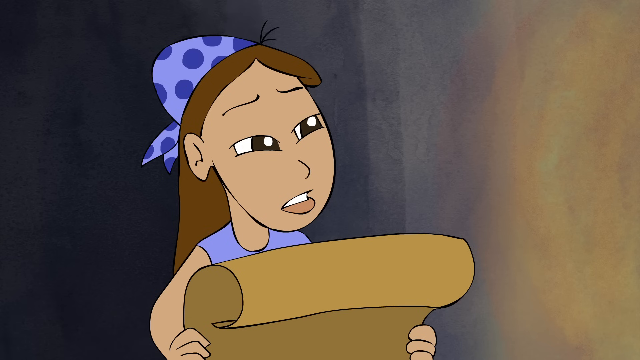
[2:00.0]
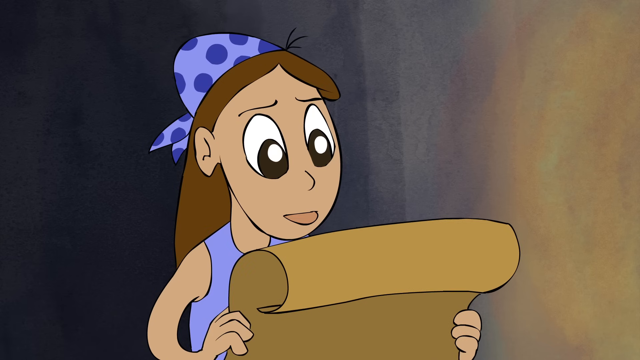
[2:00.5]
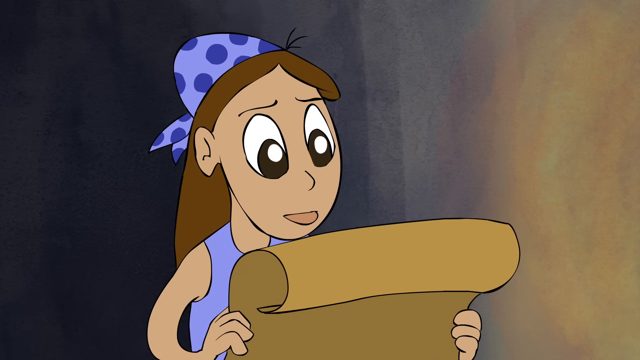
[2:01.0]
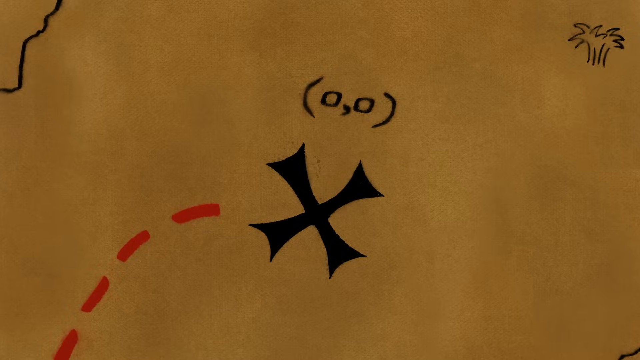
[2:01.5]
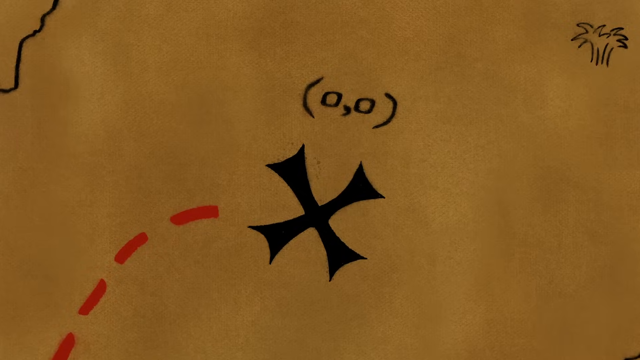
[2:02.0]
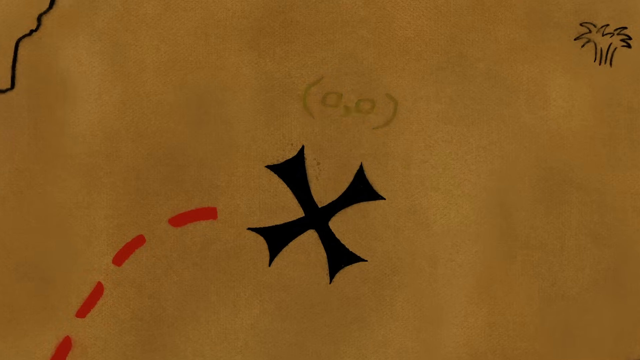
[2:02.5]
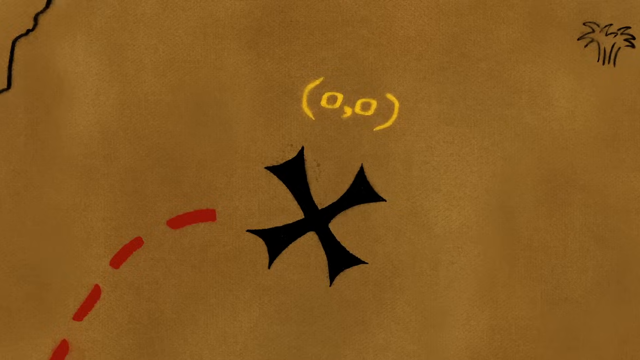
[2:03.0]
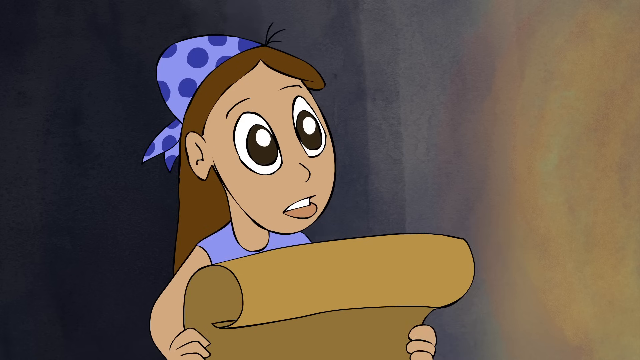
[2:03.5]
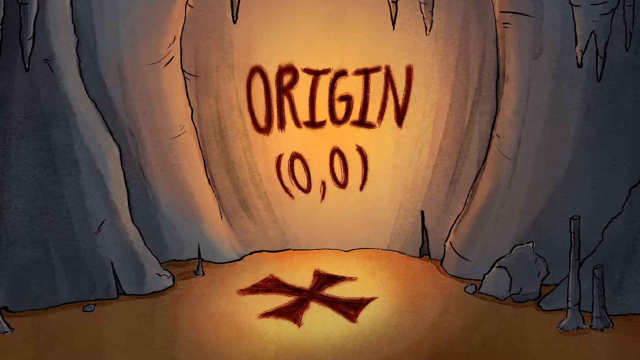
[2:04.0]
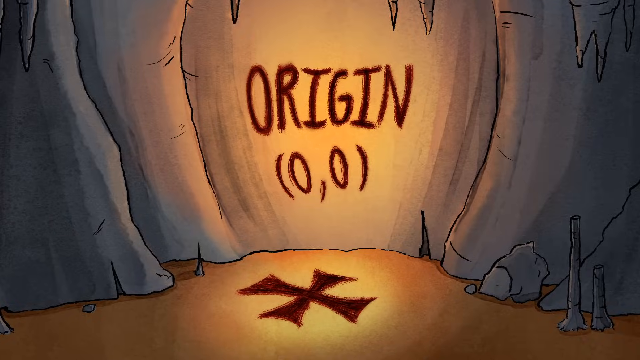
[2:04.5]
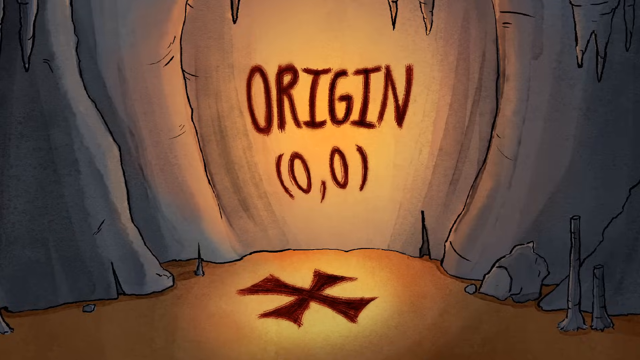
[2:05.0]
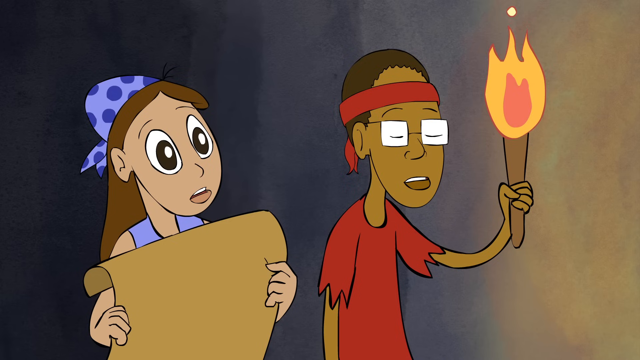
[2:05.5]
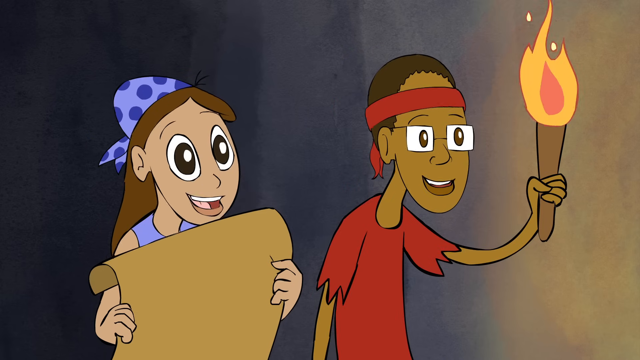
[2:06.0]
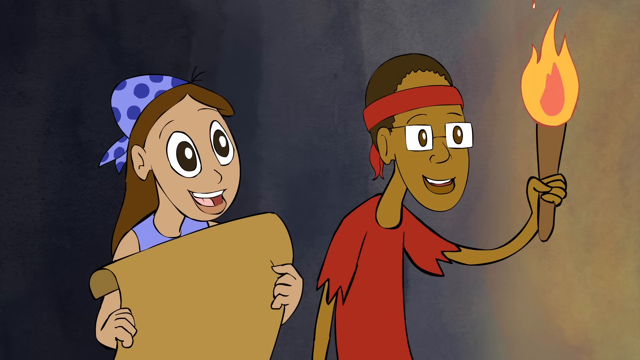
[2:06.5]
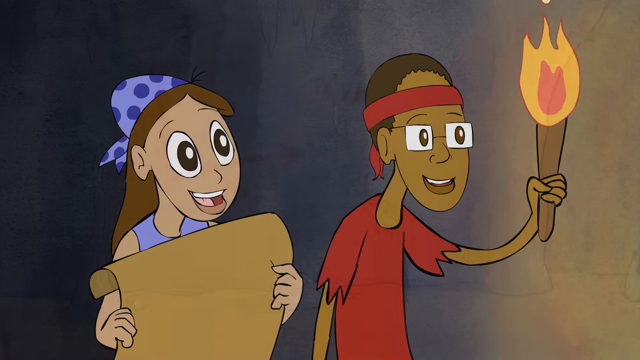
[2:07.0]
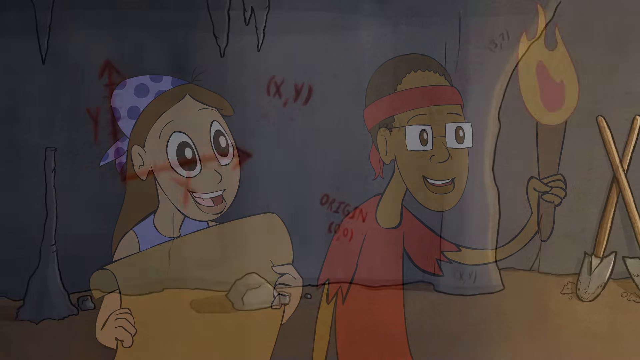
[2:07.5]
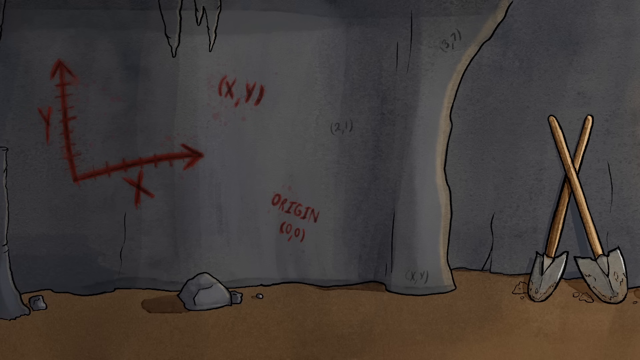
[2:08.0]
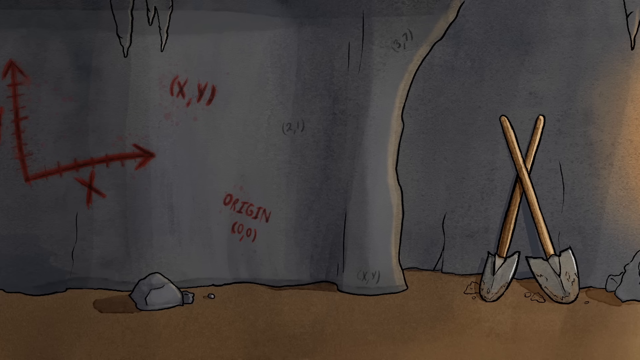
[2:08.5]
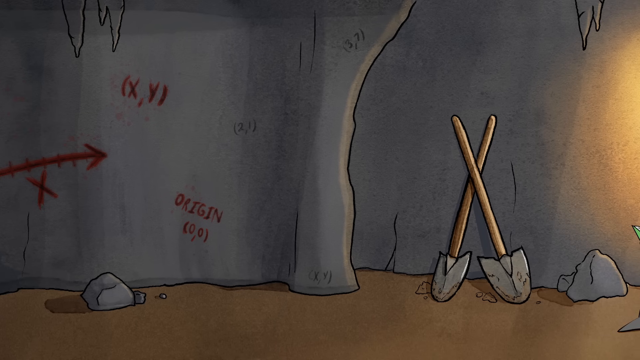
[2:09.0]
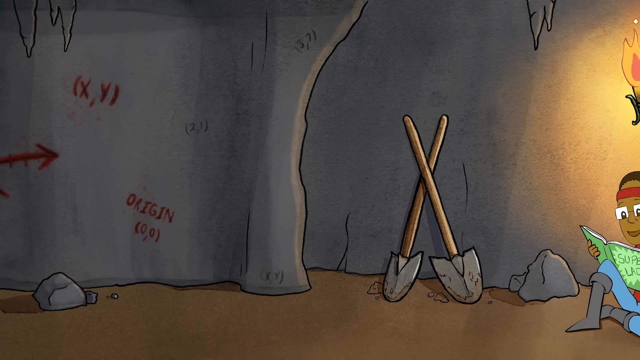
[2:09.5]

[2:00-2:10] The girl, holding a paper of instructions, looks for the location on the map and finds the origin at 0, 0, the place they were looking for. They then enjoy the place. The boy sits on the floor reading a book titled "super lady". There is fire and other things around, apparently the things they are finding.